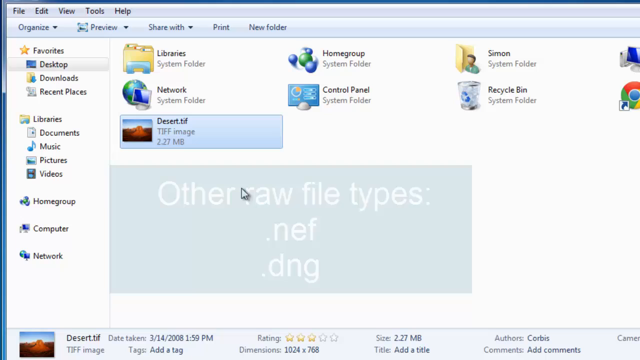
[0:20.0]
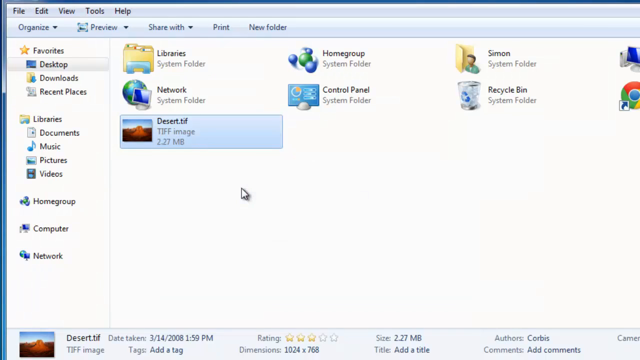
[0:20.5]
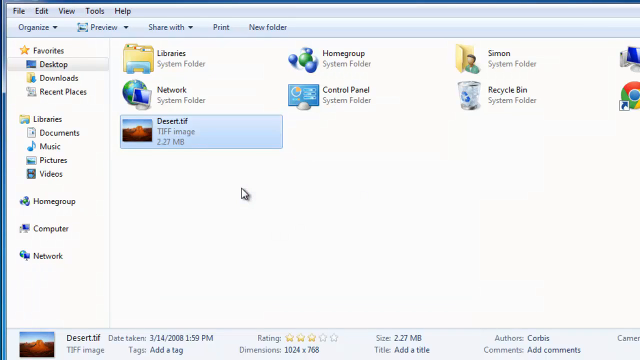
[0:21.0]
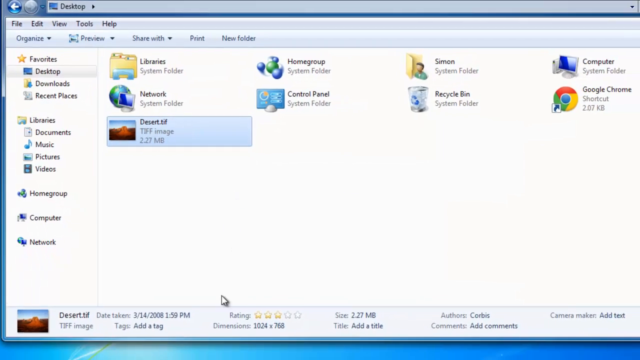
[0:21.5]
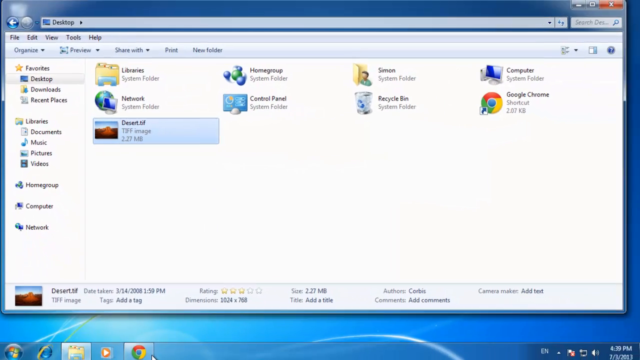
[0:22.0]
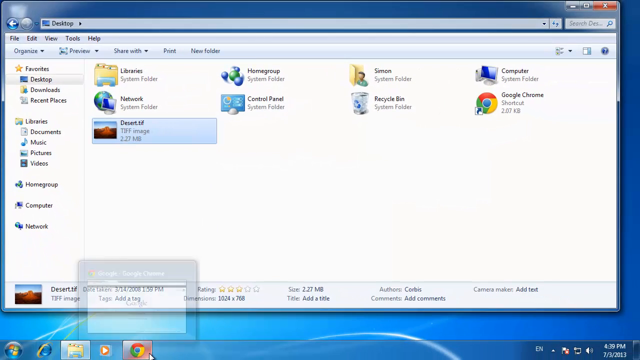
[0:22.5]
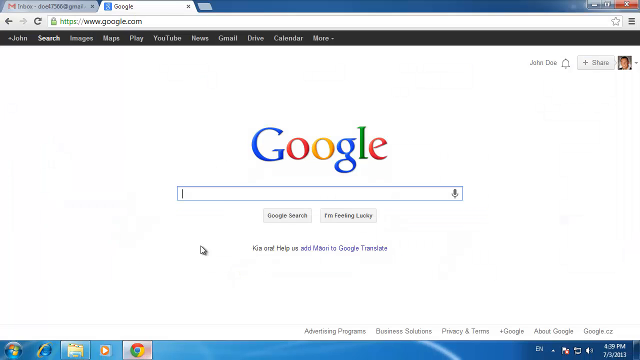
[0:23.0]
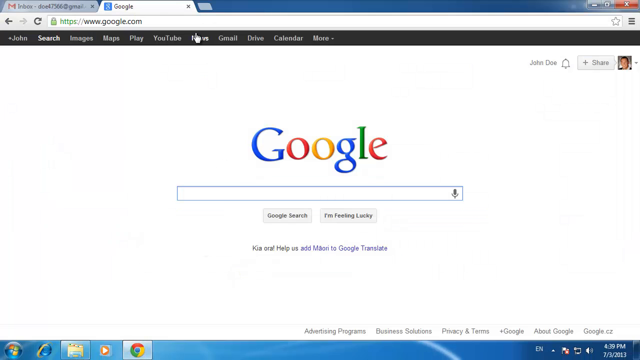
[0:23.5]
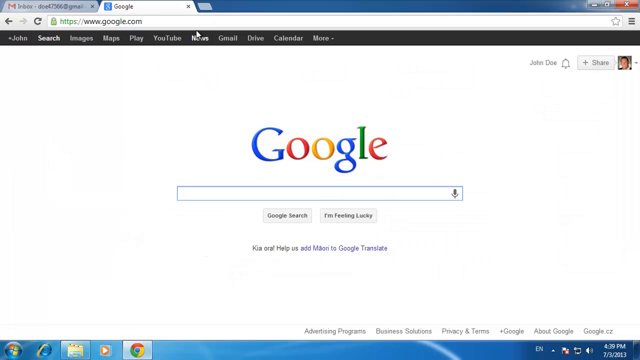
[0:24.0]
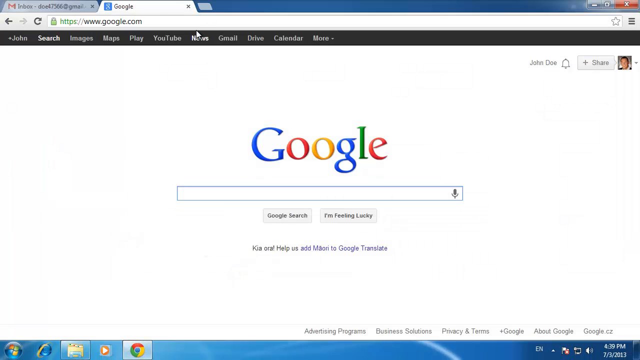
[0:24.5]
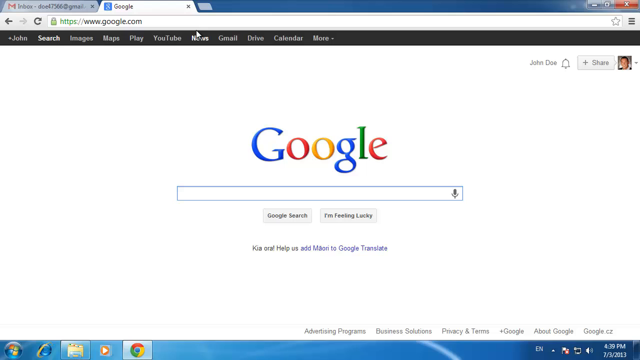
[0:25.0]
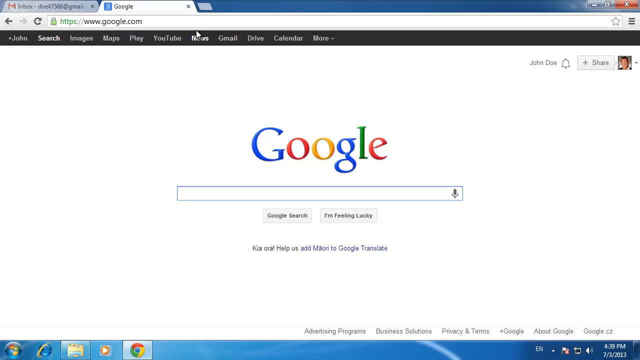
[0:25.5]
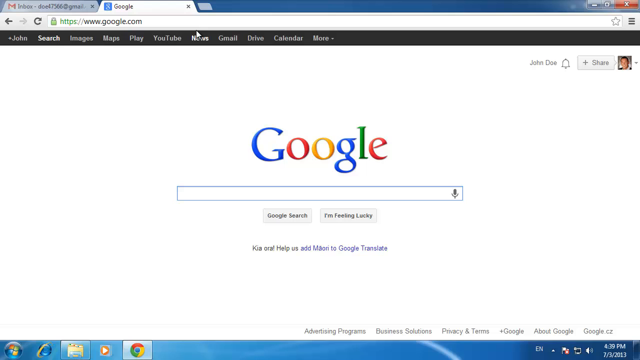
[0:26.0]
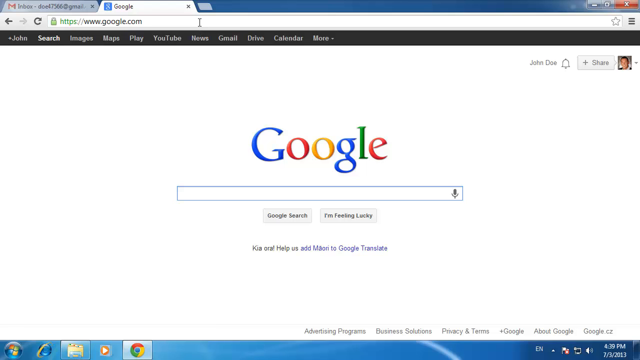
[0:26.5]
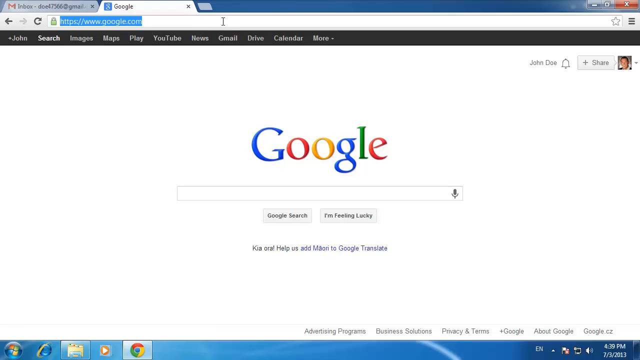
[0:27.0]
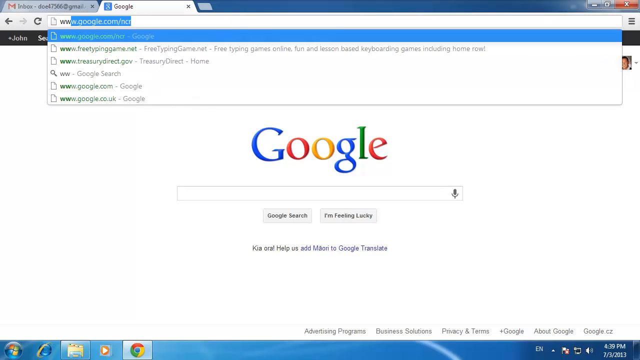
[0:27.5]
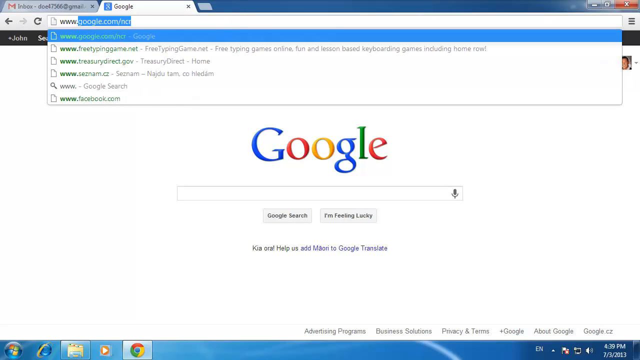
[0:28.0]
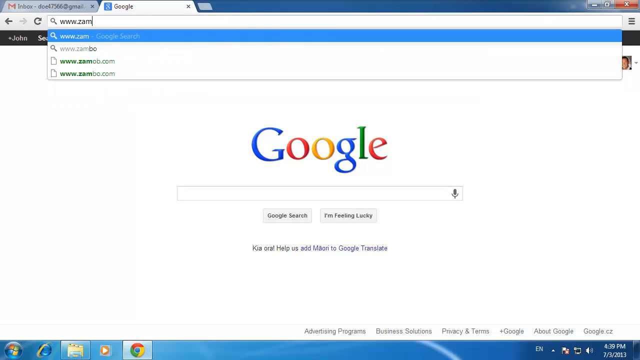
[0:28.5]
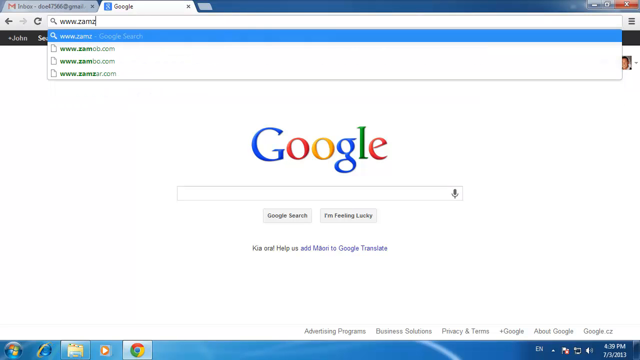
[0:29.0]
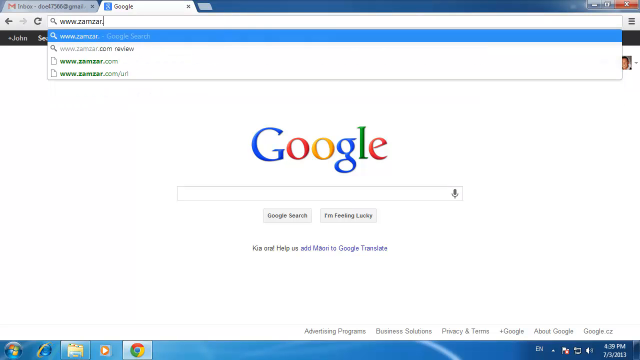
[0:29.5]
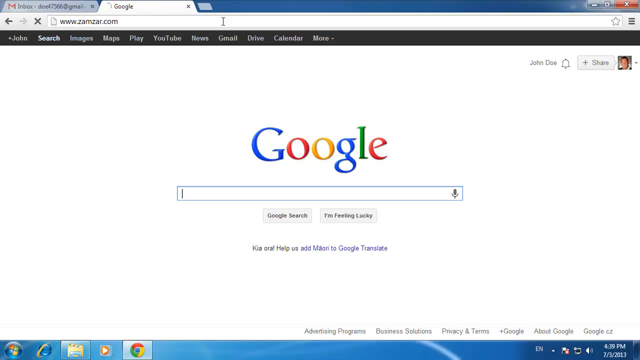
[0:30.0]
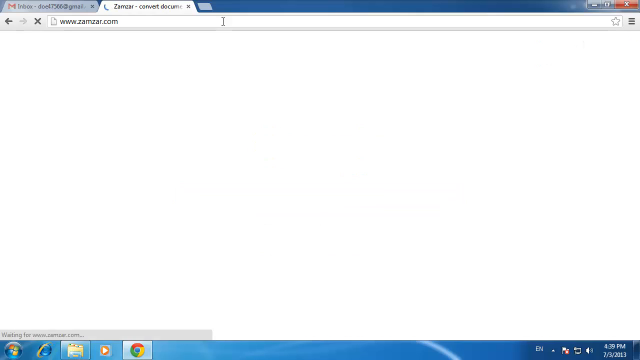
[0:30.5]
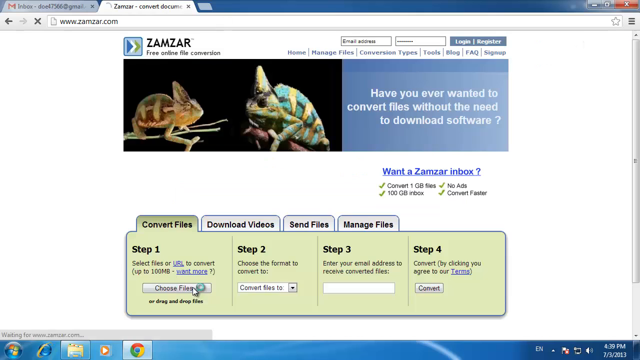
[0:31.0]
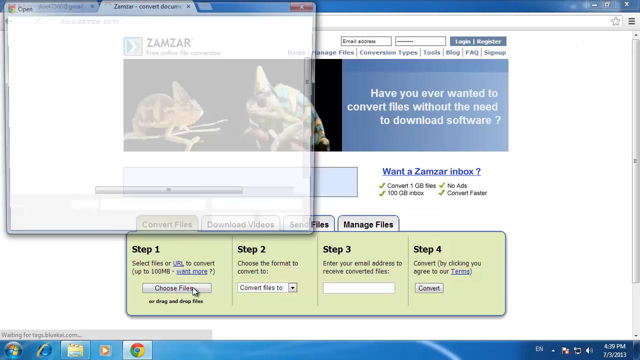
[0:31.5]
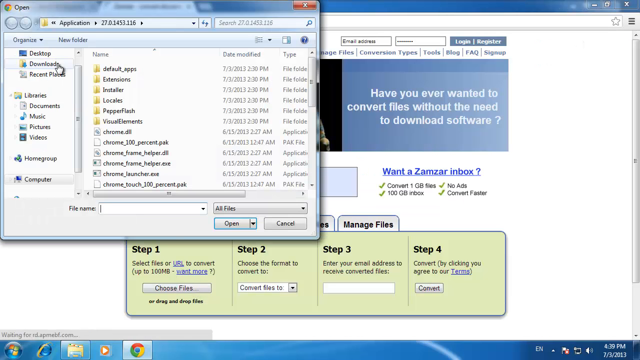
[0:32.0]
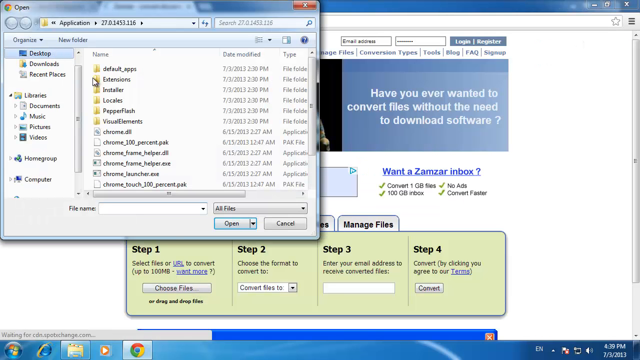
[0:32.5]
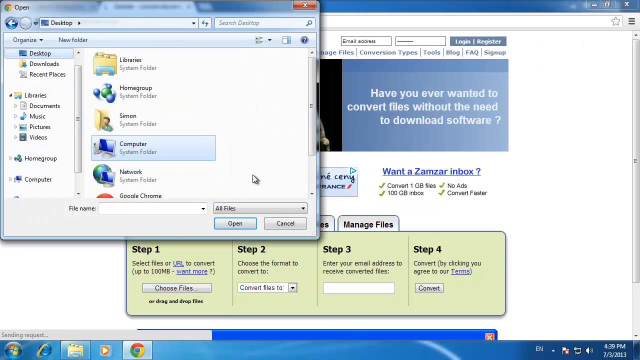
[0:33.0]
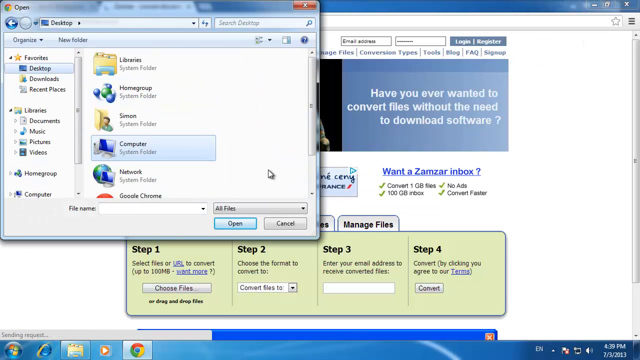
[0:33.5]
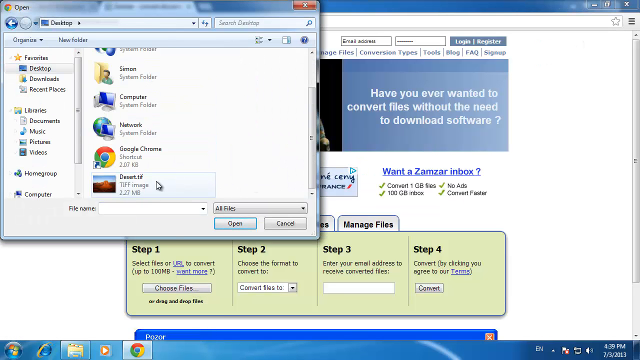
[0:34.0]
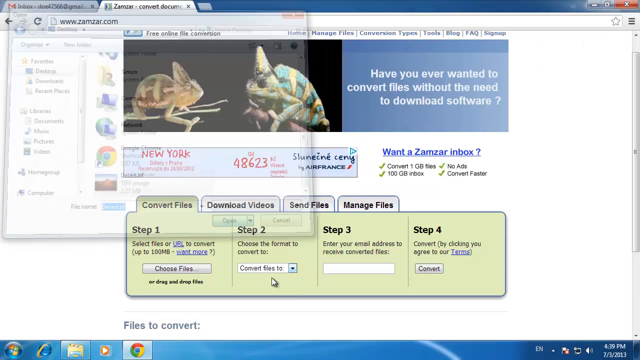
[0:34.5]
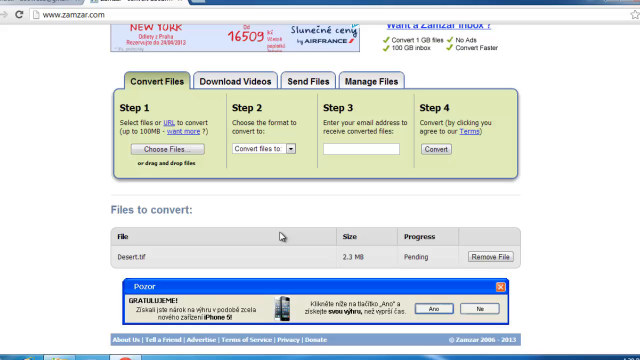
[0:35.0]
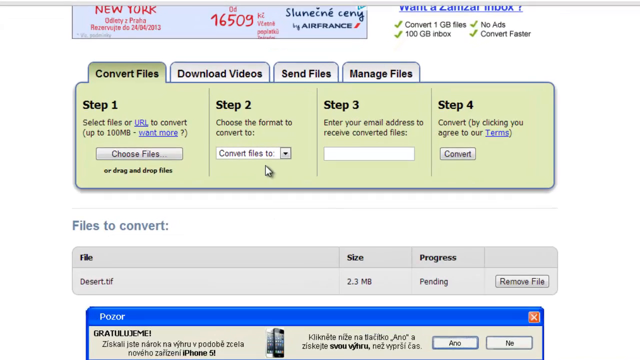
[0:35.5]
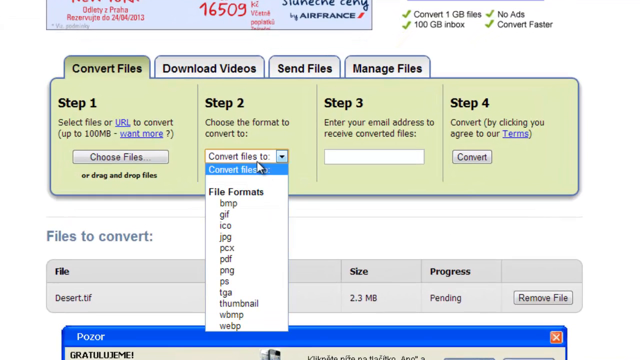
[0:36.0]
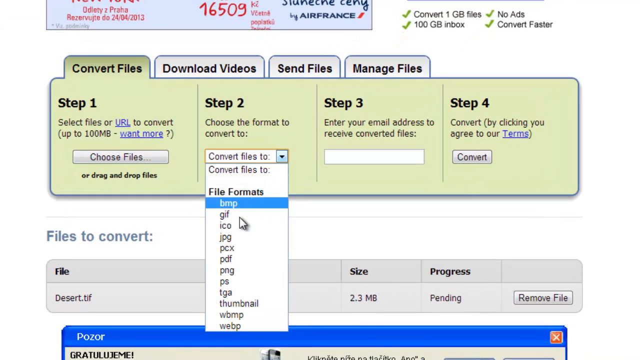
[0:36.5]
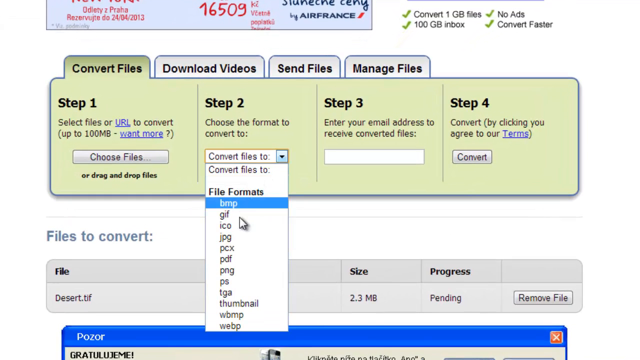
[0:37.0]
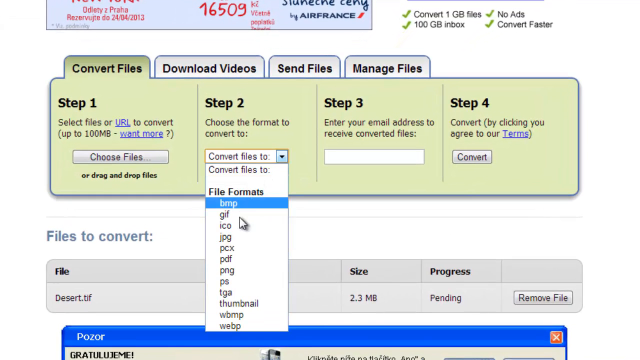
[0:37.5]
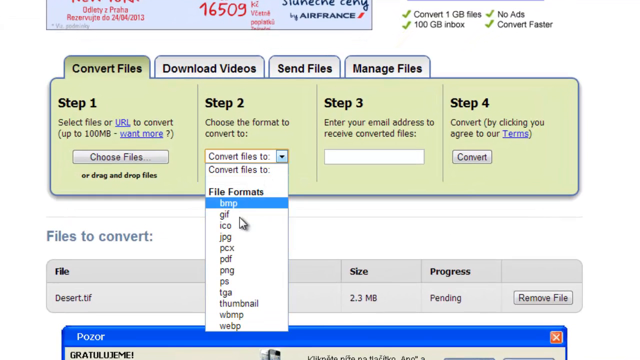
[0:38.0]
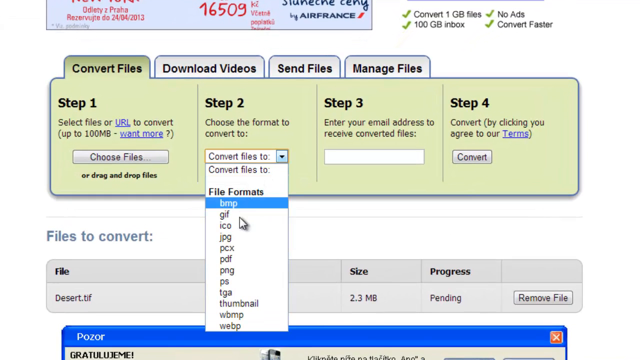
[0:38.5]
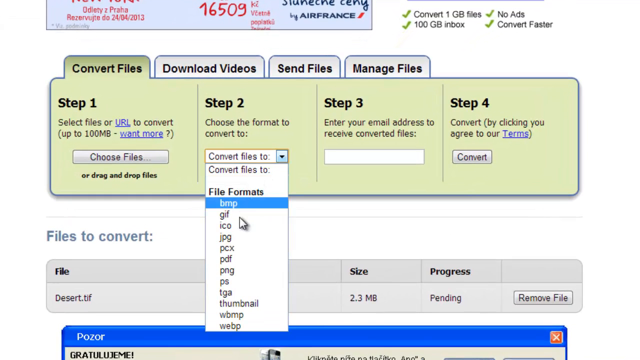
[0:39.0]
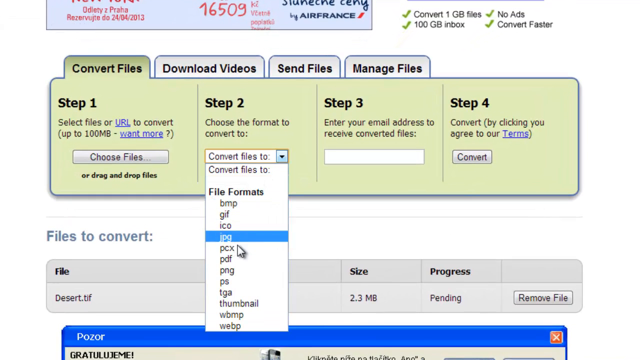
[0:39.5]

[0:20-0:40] The person goes to Google in Google Chrome and types in www.zamzar.com. They go to the desktop and click on the picture, moving very quickly. The site is a file converter showing "Step one, choose file" and "Step two" for formatting the file, with their picture shown to the right. It then shows something like "choose the format you want to convert to"; the choice goes by too fast to tell, though it is not GIF. Typing appears on the screen, but no people are shown. It seems to be some kind of tutorial.